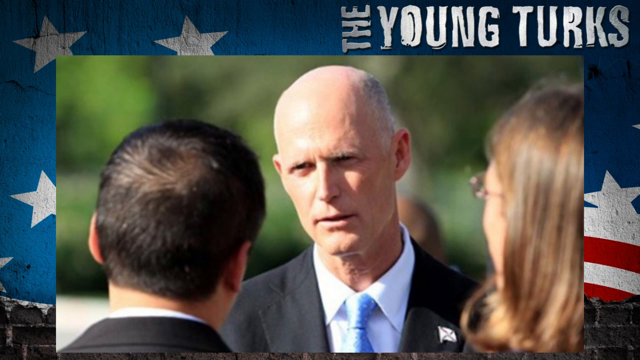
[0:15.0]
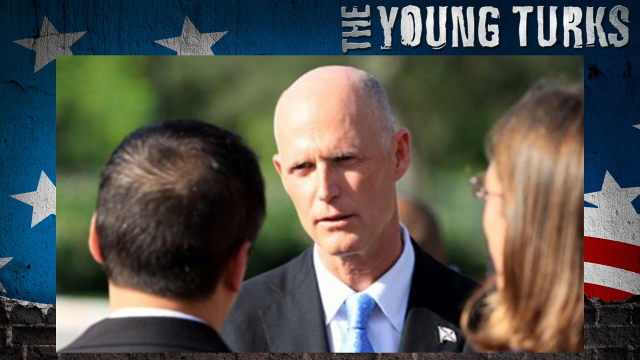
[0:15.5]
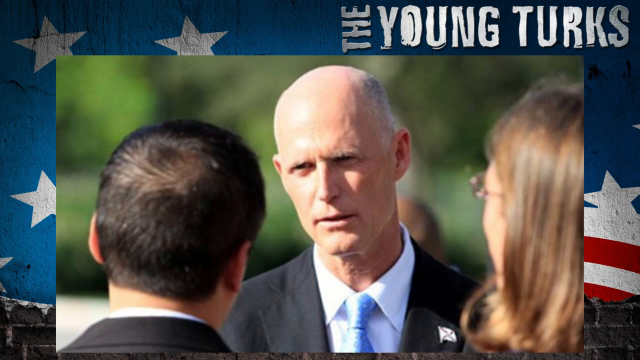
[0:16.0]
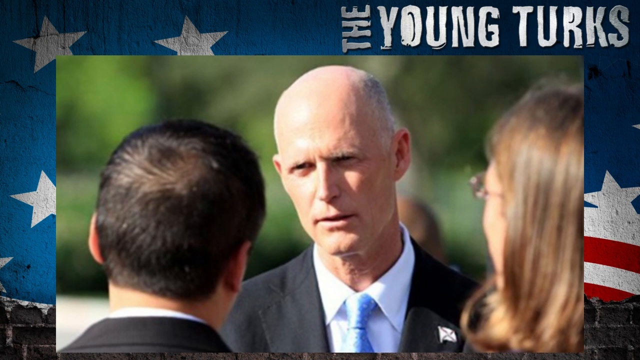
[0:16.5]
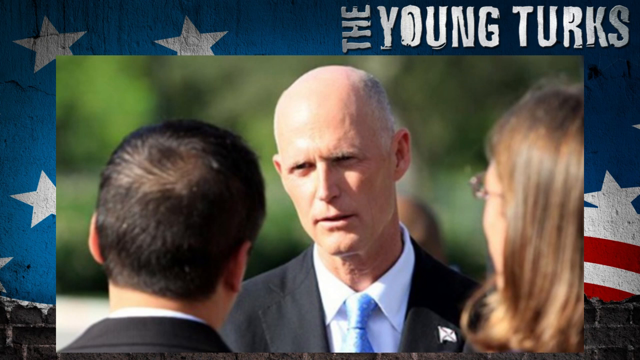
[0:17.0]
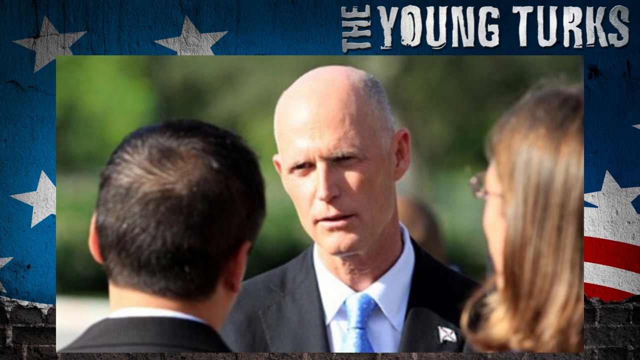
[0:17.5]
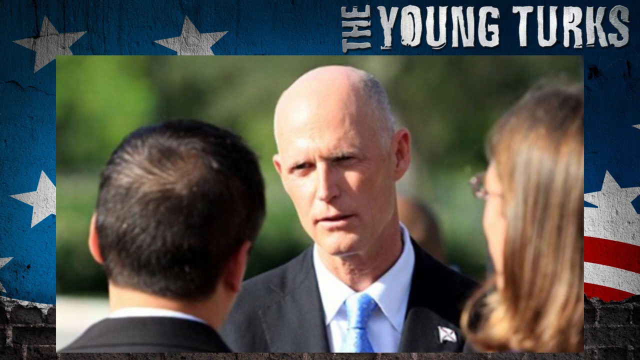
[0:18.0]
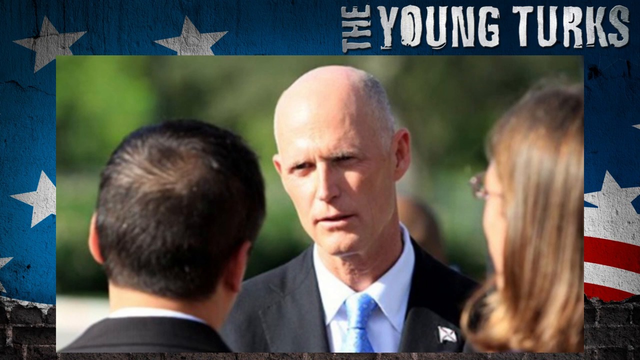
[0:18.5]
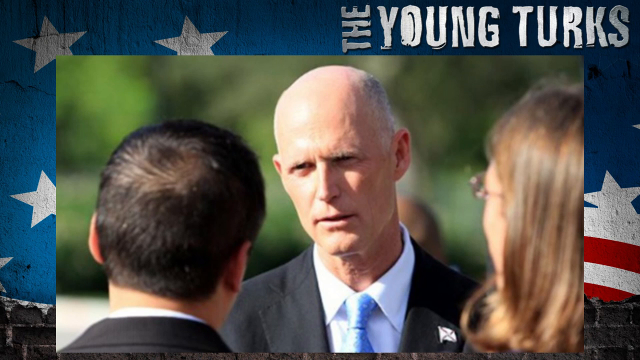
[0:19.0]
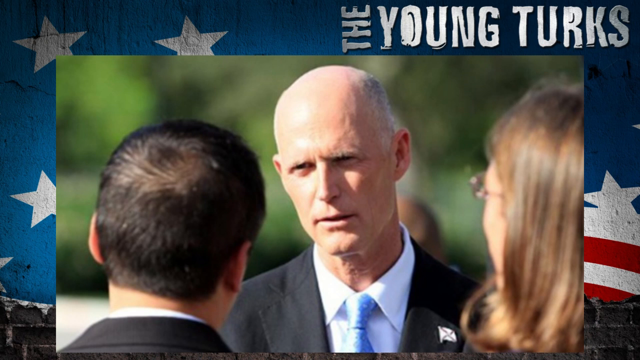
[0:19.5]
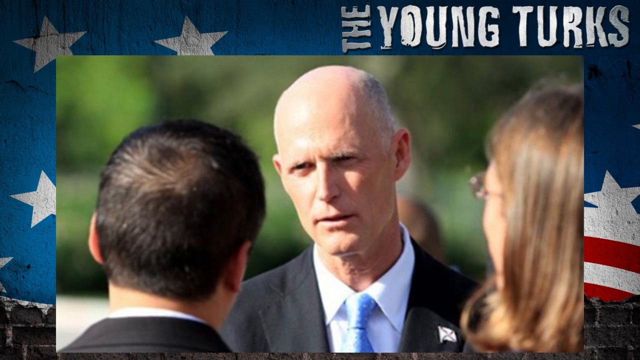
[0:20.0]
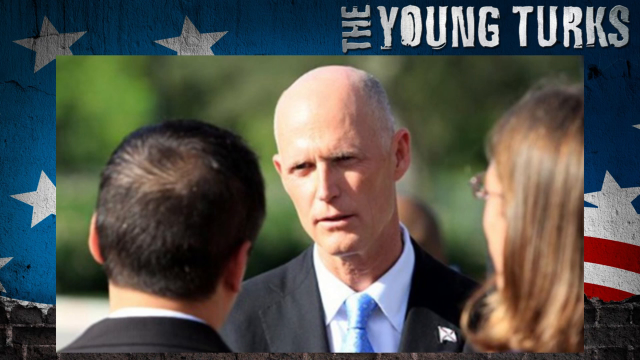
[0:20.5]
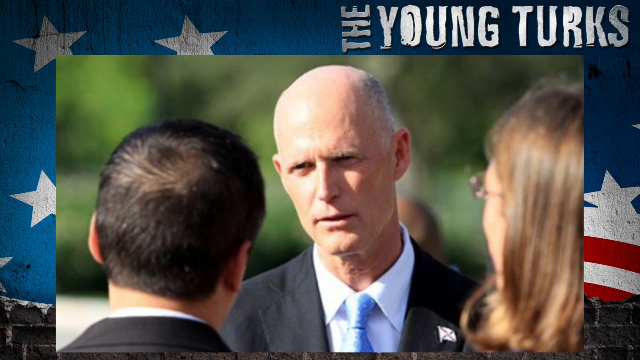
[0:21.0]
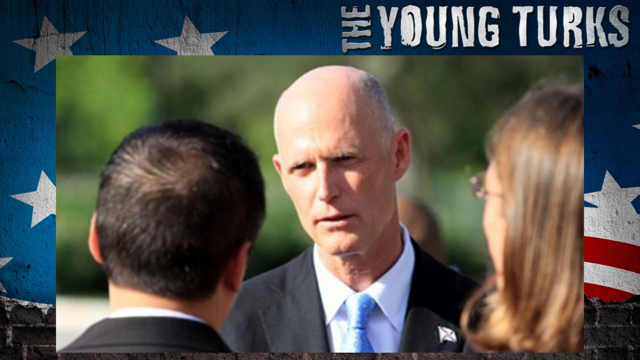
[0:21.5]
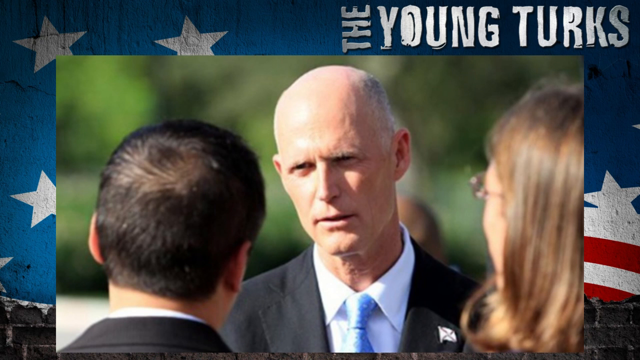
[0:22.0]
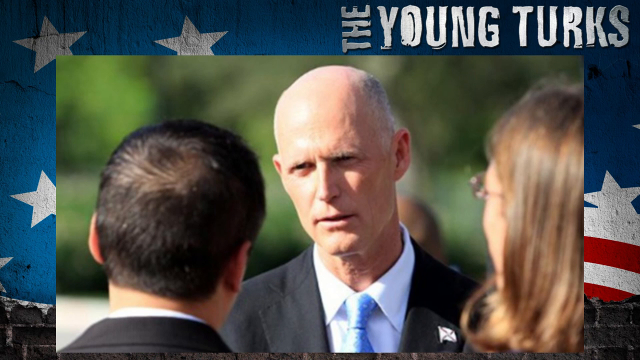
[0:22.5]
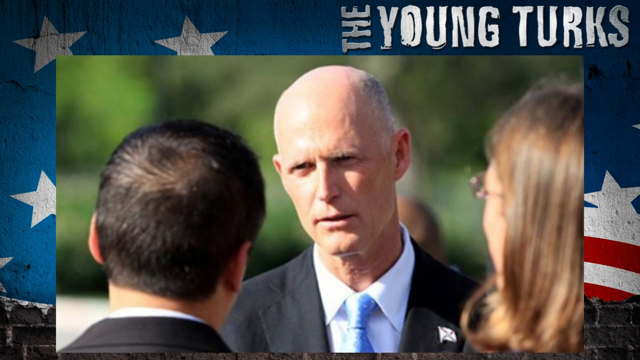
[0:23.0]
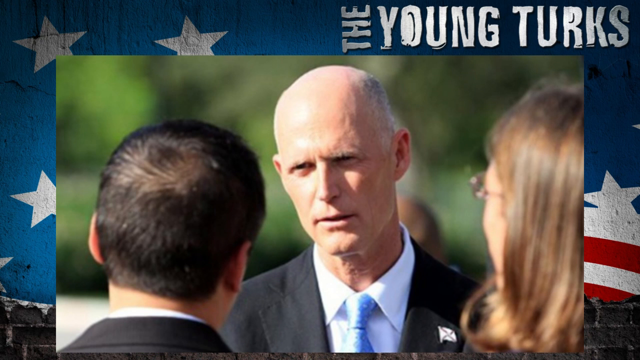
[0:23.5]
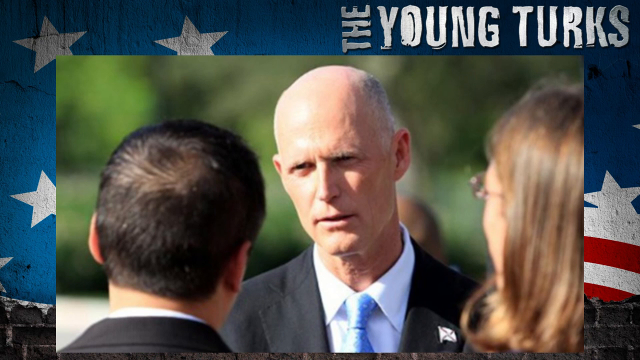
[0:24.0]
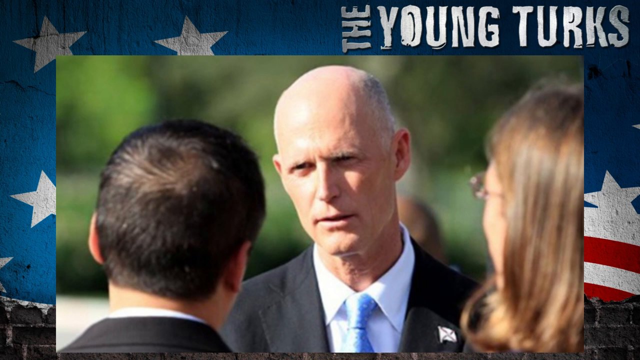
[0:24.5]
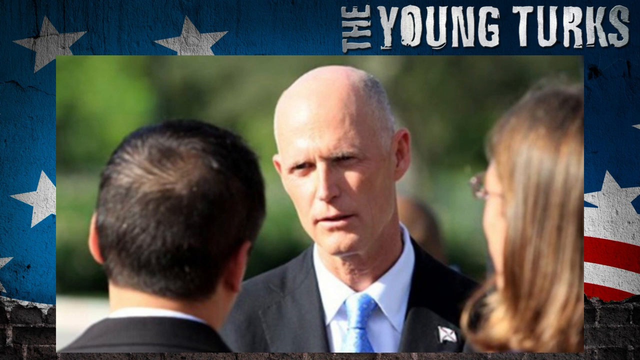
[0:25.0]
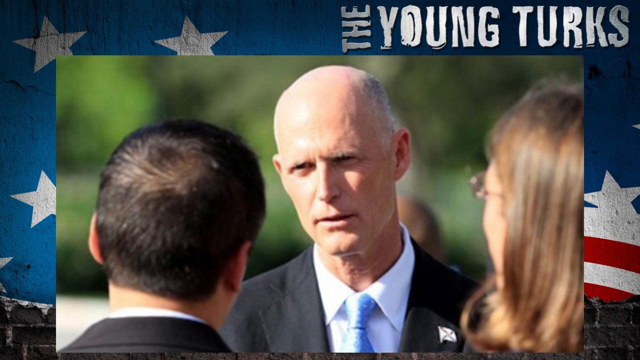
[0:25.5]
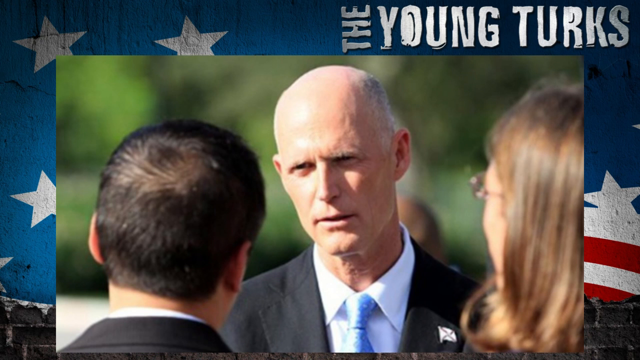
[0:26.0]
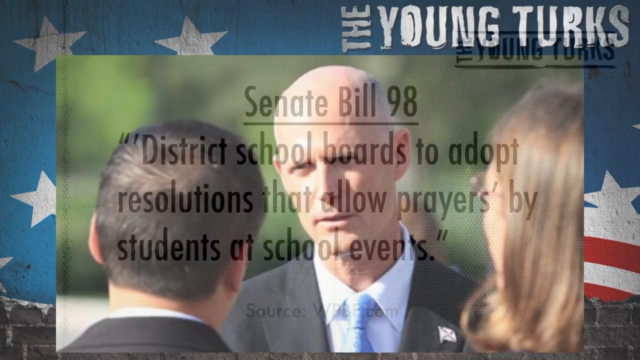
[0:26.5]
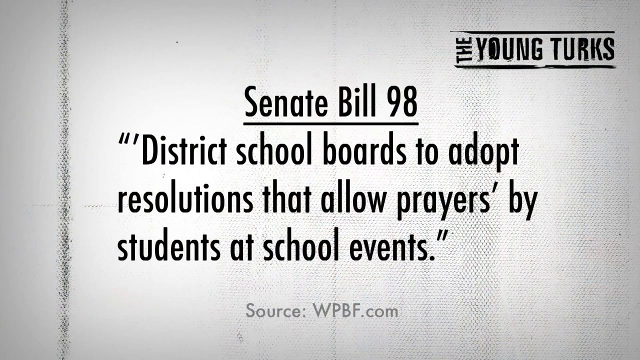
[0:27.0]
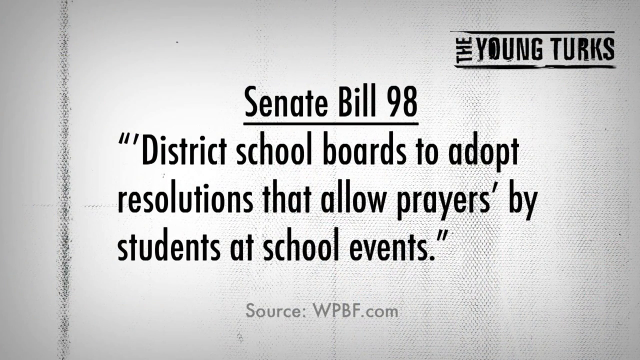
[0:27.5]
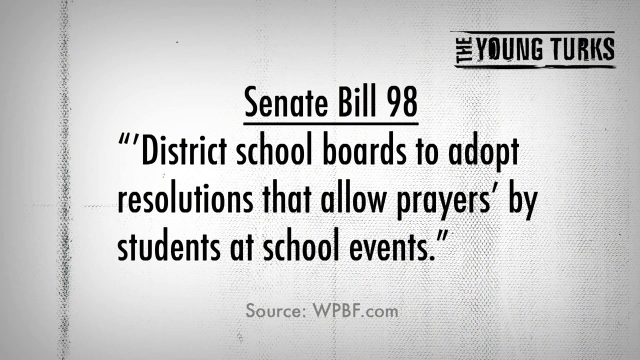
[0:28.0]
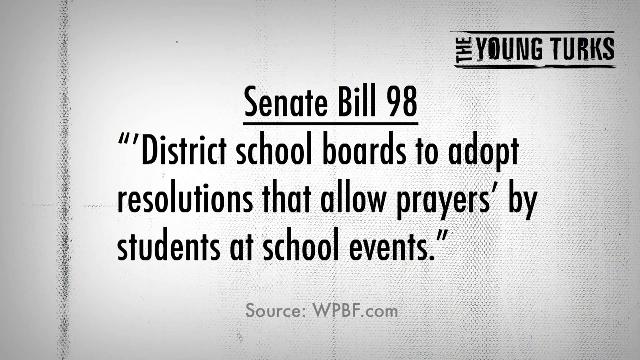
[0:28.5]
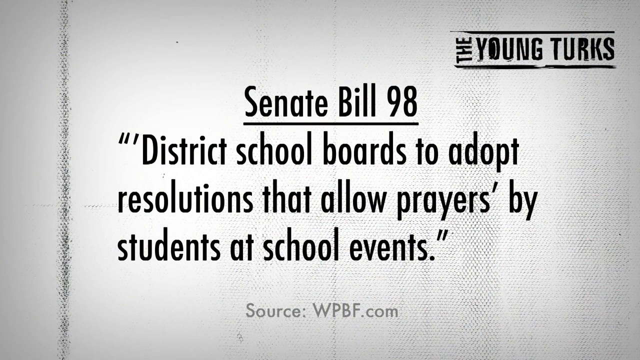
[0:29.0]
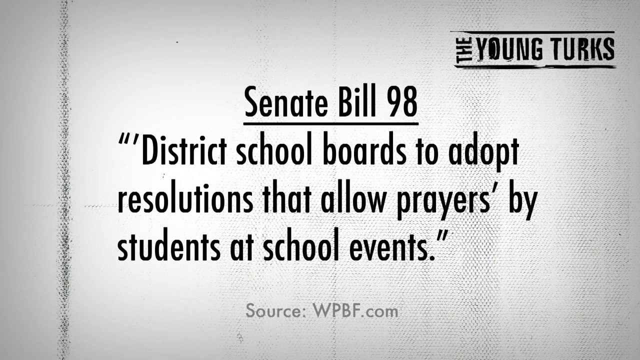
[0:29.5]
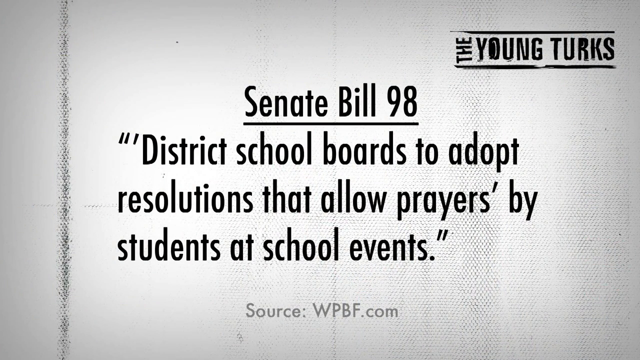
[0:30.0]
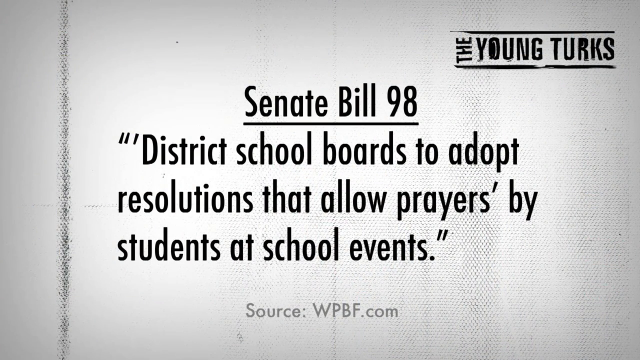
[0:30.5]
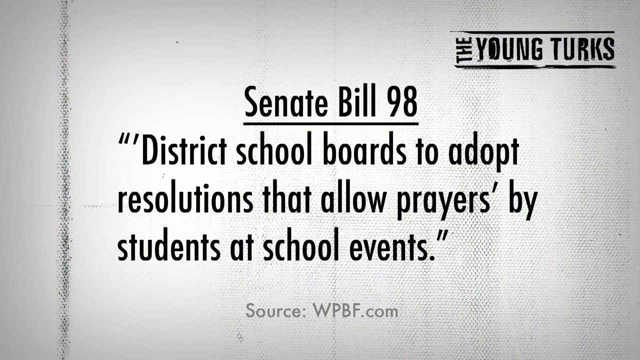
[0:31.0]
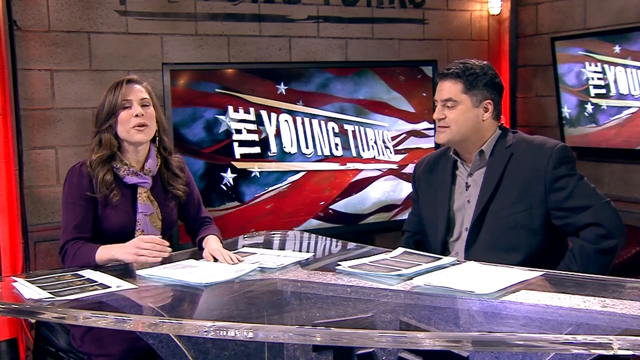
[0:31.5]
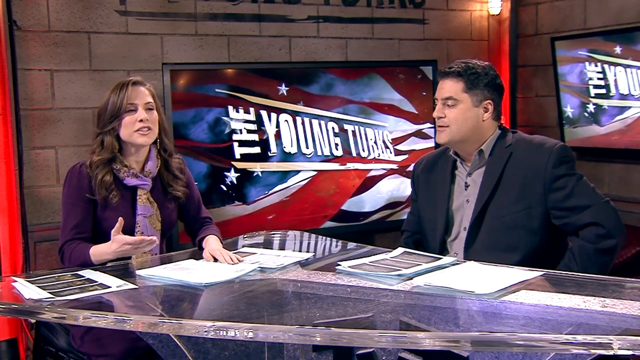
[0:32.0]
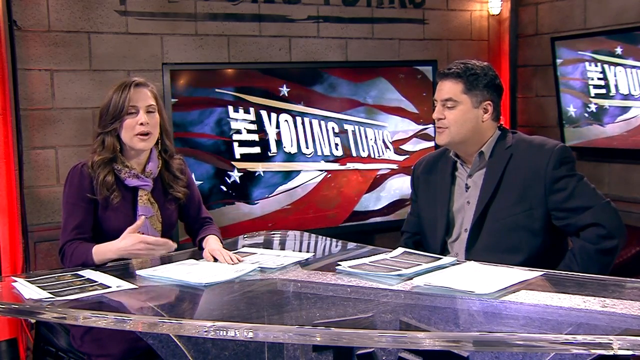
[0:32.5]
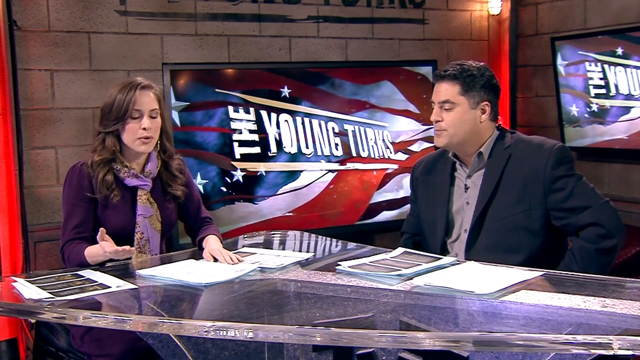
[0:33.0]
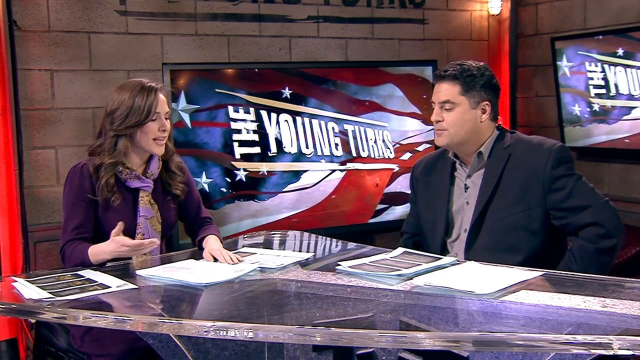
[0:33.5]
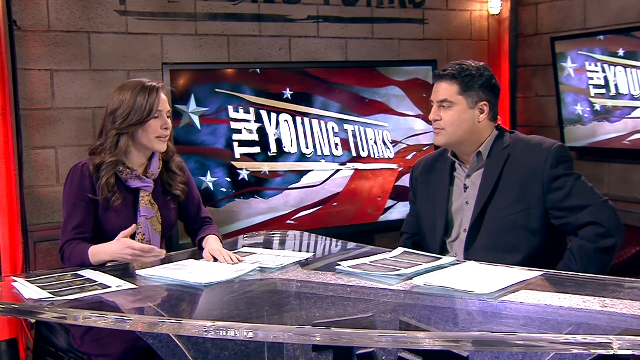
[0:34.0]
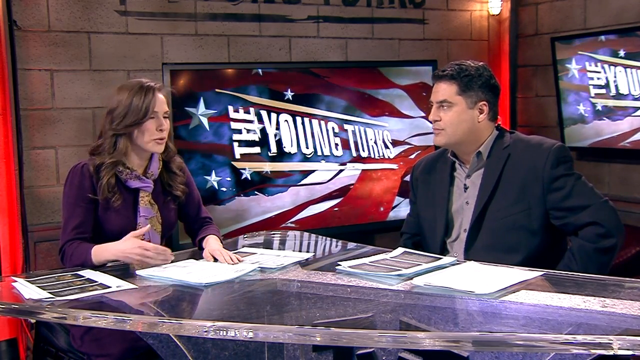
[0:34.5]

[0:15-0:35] A photo shows a bald man with a somewhat serious face looking over to the side at somebody who is looking at him. A woman is on the right; both people, seen from the backs of their heads, are looking at the man. He wears a light blue tie, a white shirt and a darker blazer. "The Young Turks" appears in the top right, and a flag is in the background. The video then moves to a white screen with the underlined title "Senate Bill 98" and, in quotation marks, the text "district school boards to adopt resolutions that allow prayers by students at school events." From that screen it cuts to the two reporters sitting at a table talking: the woman in purple with her scarf is on the left with papers in front of her, and a man is on the right.